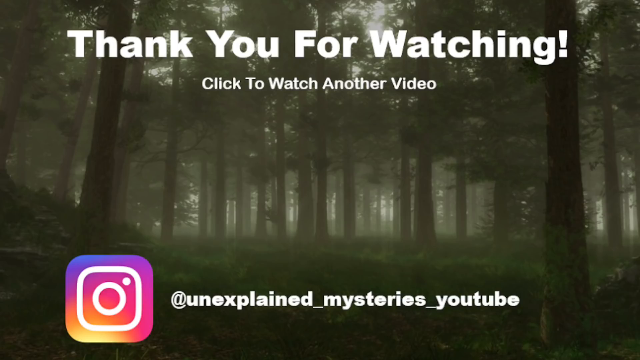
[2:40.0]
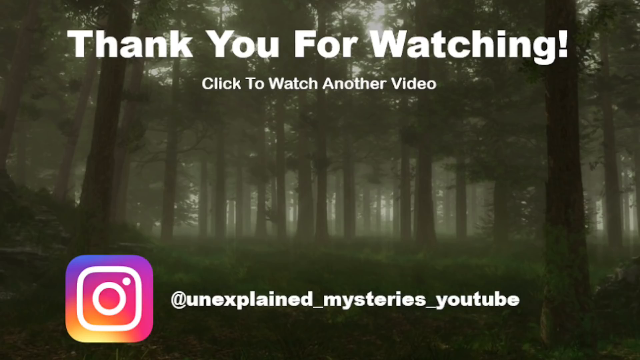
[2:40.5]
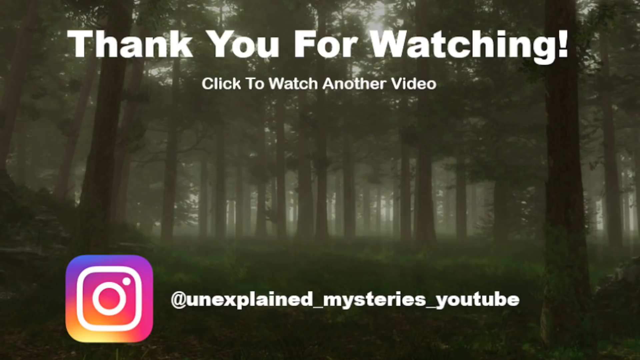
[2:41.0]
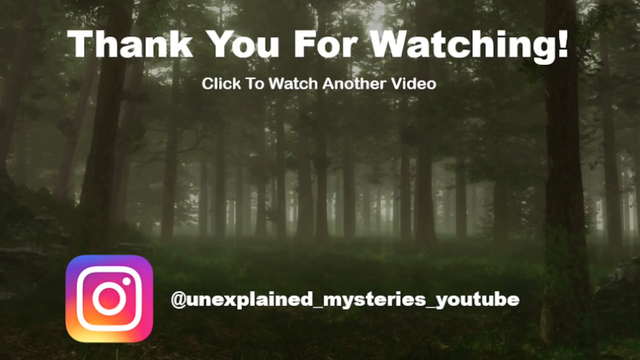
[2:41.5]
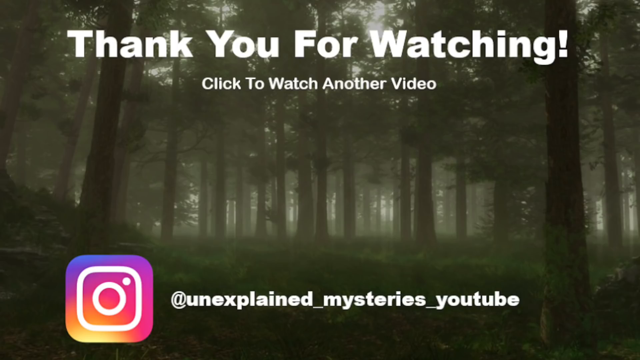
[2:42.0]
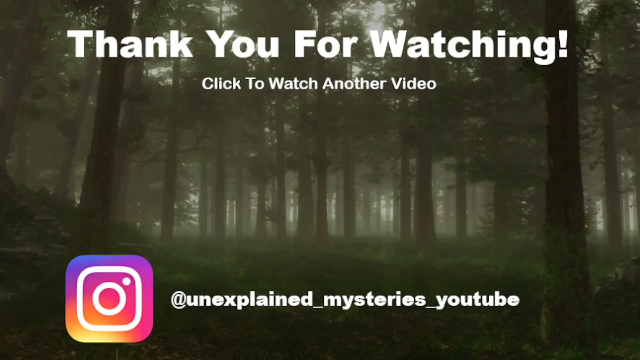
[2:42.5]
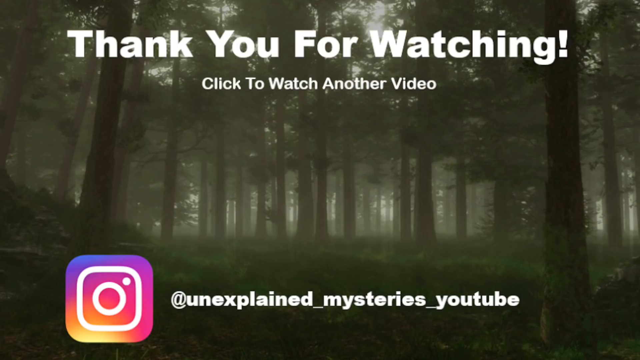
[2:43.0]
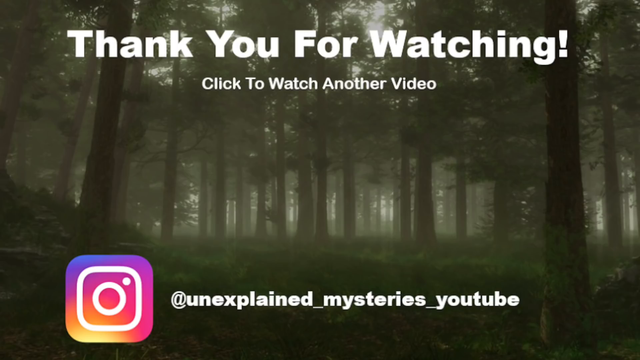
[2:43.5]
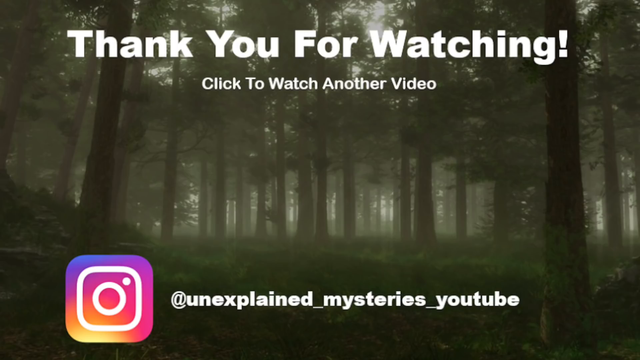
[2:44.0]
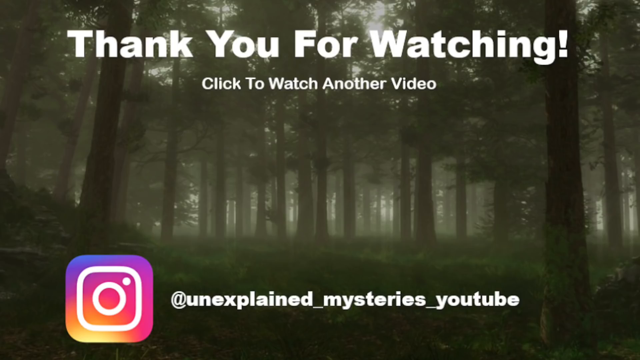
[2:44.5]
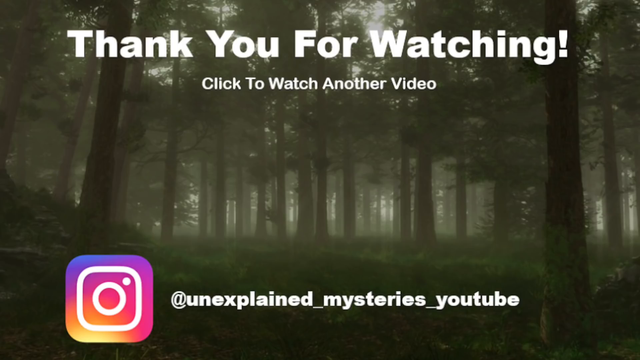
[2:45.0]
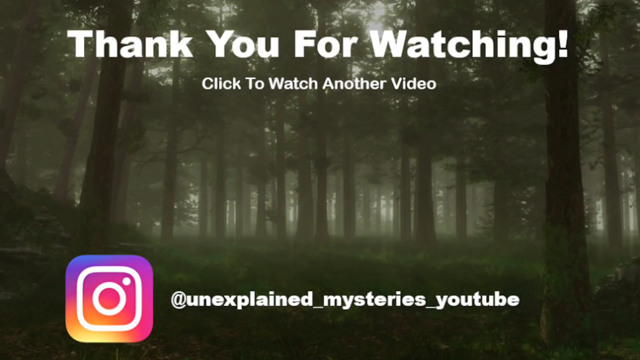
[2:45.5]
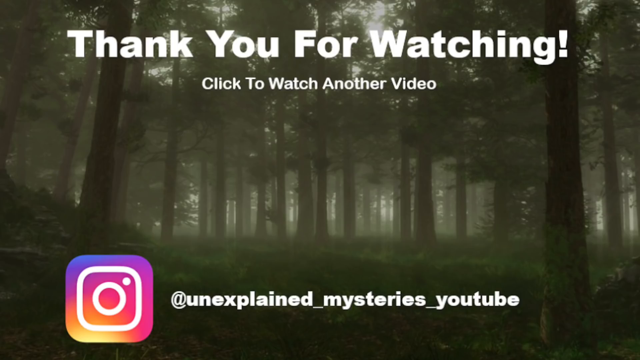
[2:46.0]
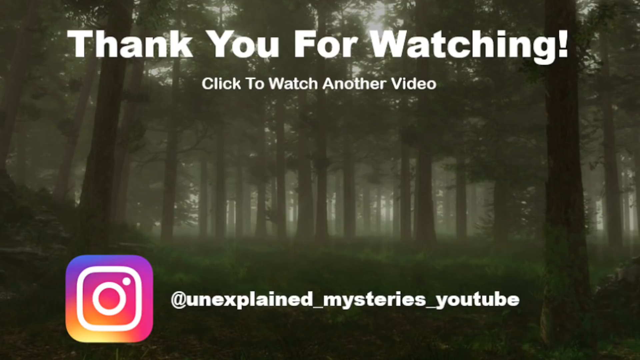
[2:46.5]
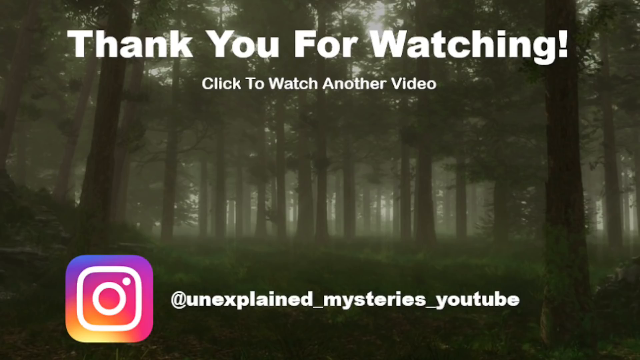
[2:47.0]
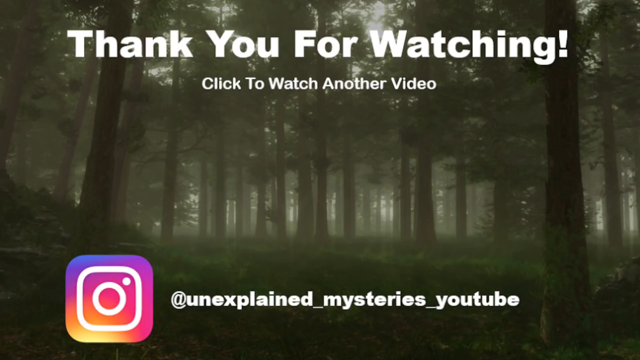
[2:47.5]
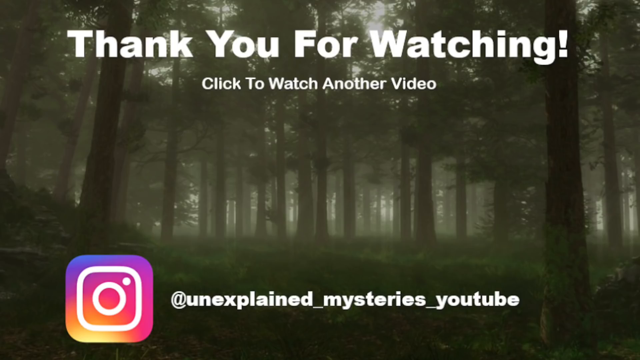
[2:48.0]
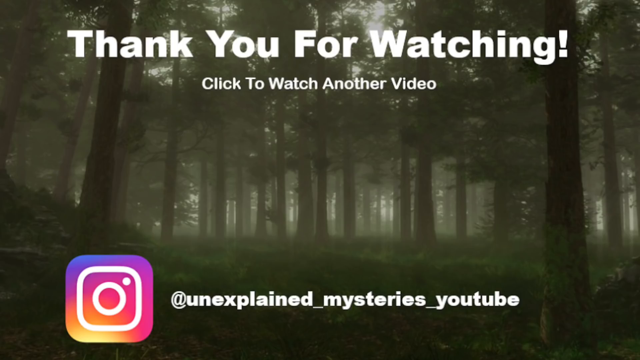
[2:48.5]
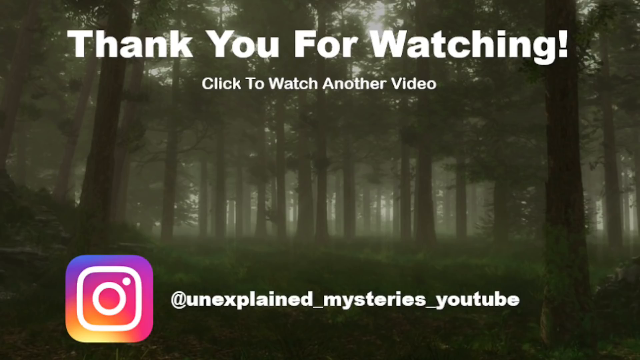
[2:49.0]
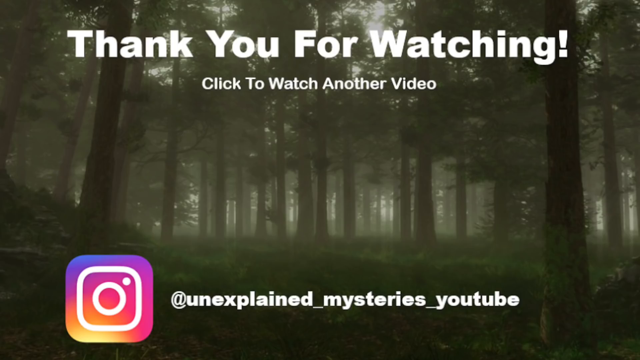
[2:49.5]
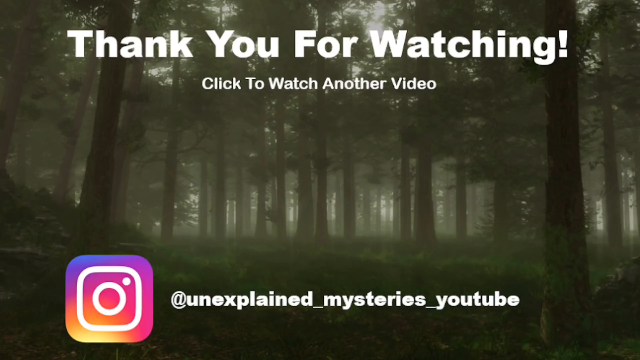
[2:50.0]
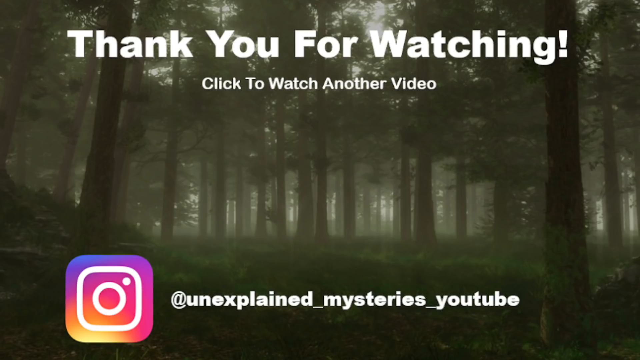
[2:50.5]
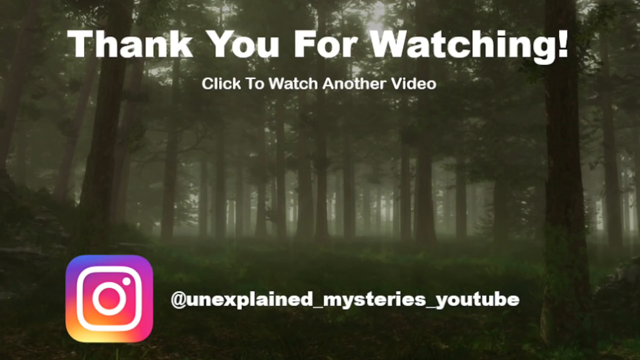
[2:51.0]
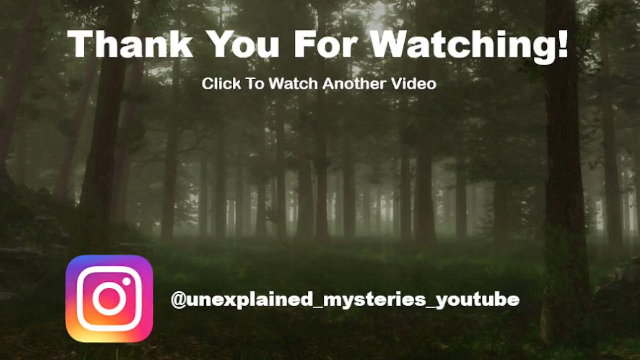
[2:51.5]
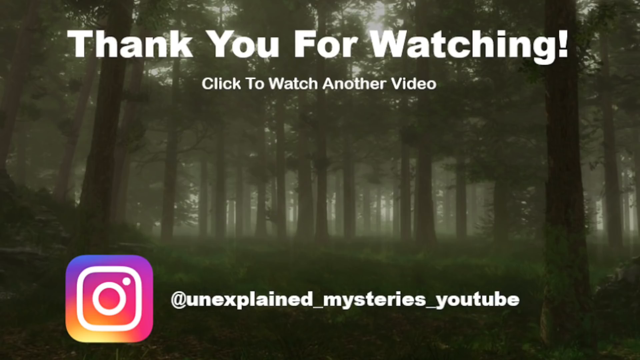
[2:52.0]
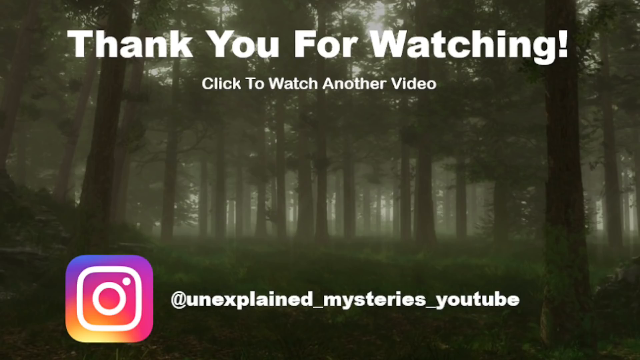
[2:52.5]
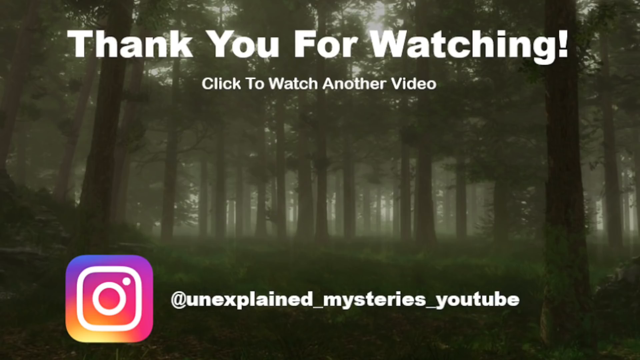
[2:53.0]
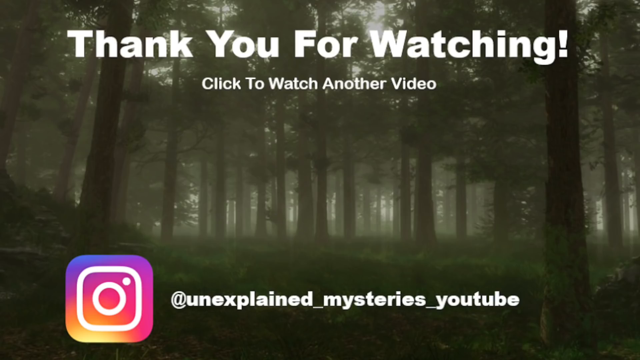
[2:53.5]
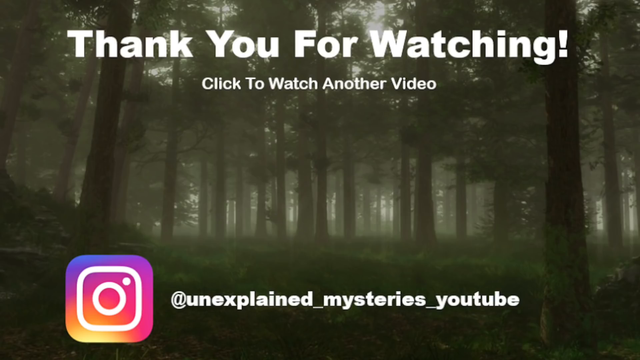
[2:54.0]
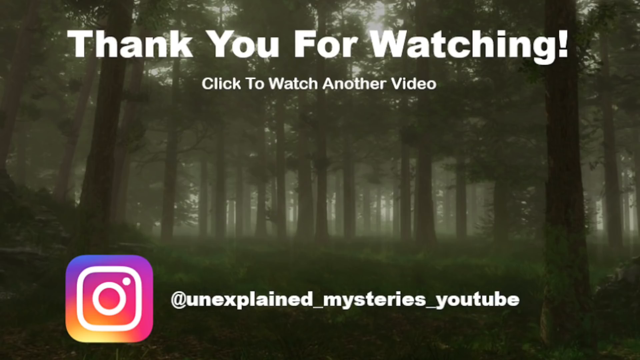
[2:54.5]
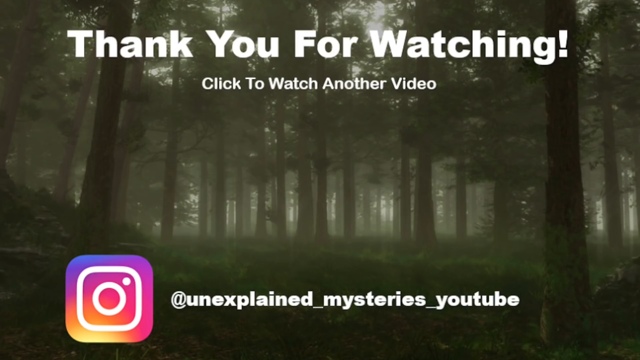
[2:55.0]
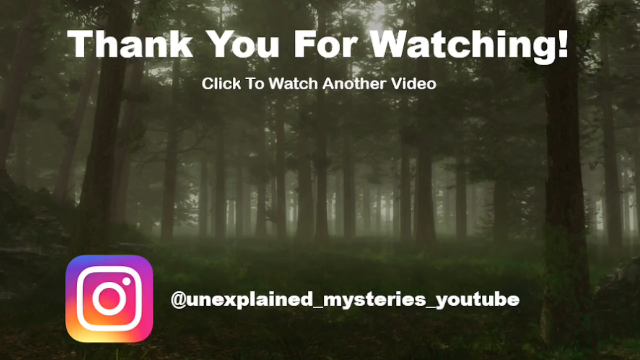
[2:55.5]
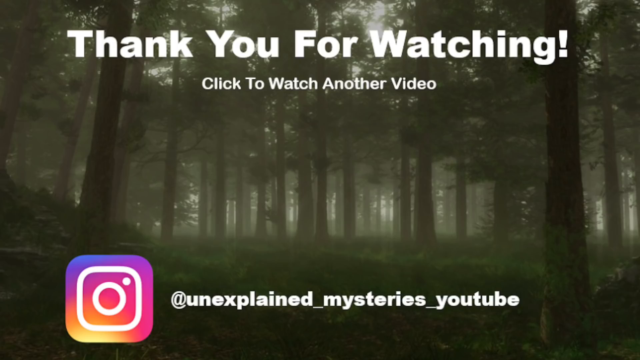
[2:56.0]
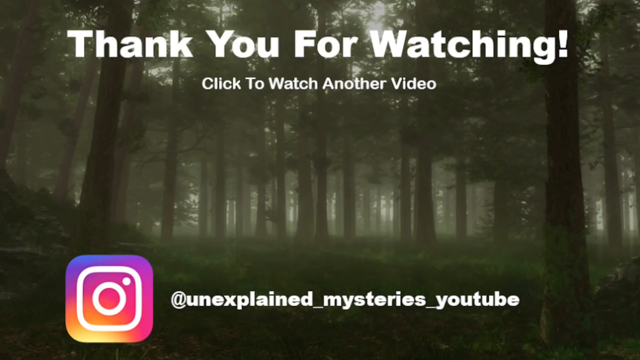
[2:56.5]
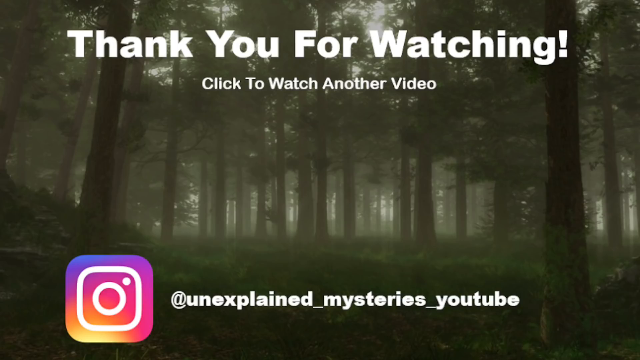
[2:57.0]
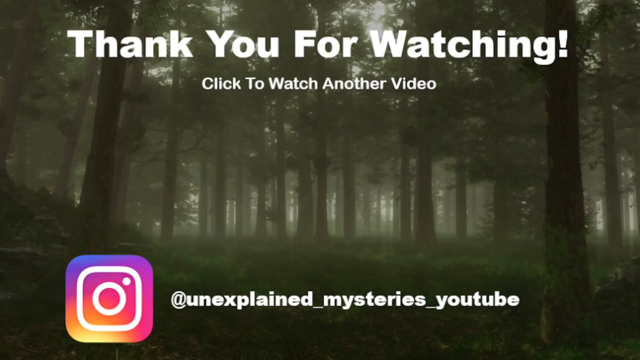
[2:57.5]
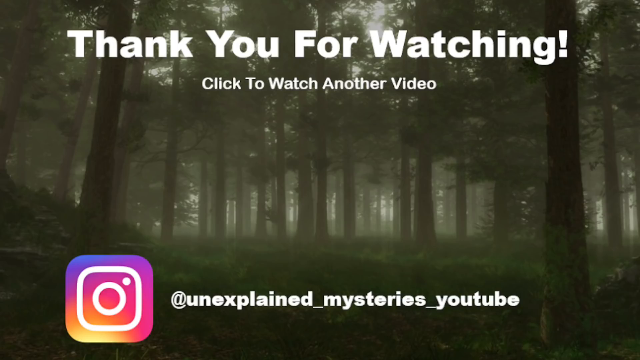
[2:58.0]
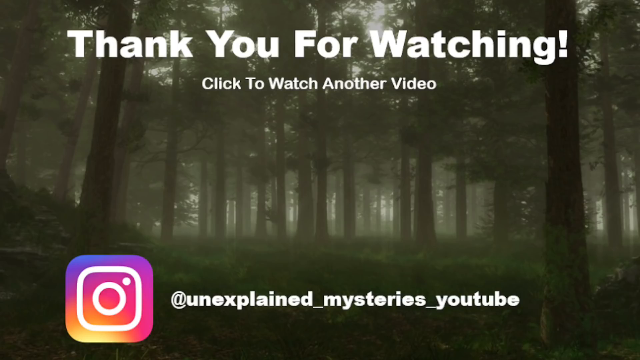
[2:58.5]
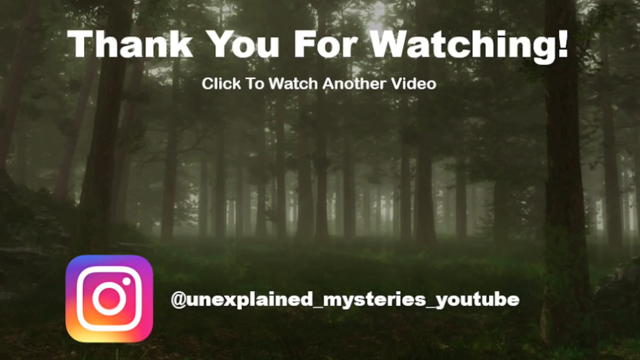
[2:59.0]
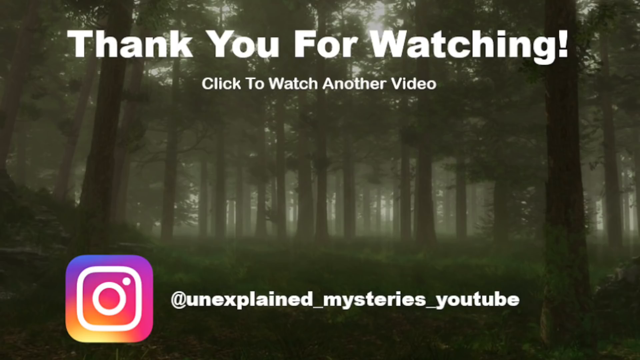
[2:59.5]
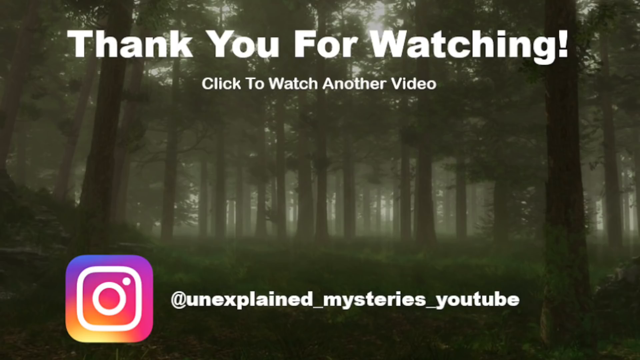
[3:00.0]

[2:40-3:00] The background looks like a forest, with trees everywhere and a slightly foggy look; the sky appears foggy and is blocked by the trees. At the top, in a bigger white font, text reads "Thank you for watching!" Underneath it, in a much smaller white font, it says "click to watch another video". On the lower left side there is the Instagram symbol, and next to it the text "at unexplained_mysteries_YouTube". This is shown for the rest of the video, and none of the words move or shake; everything is stationary.